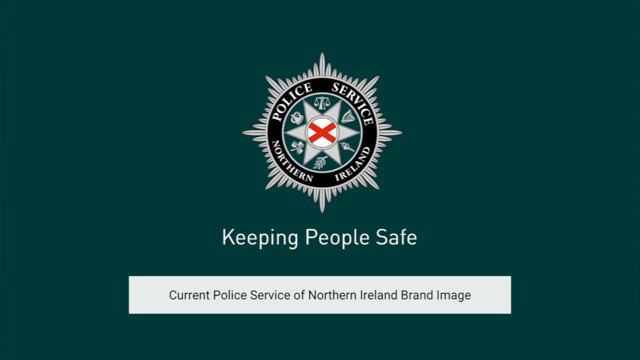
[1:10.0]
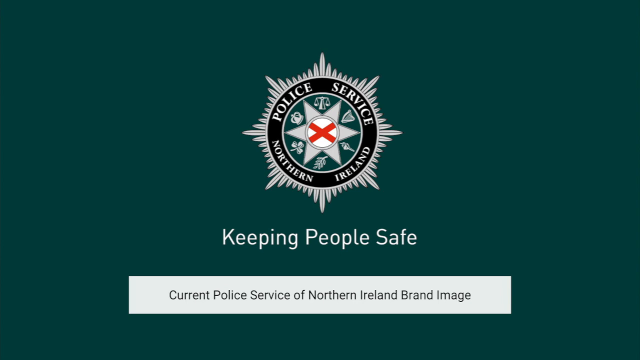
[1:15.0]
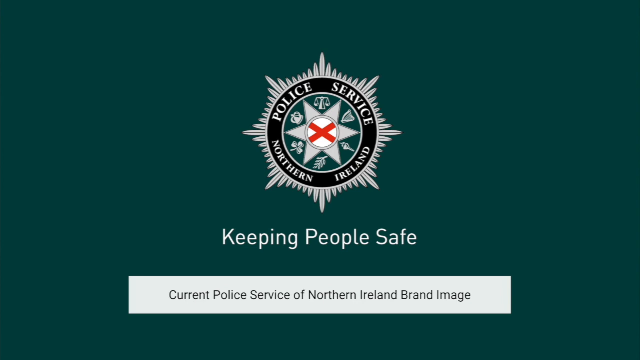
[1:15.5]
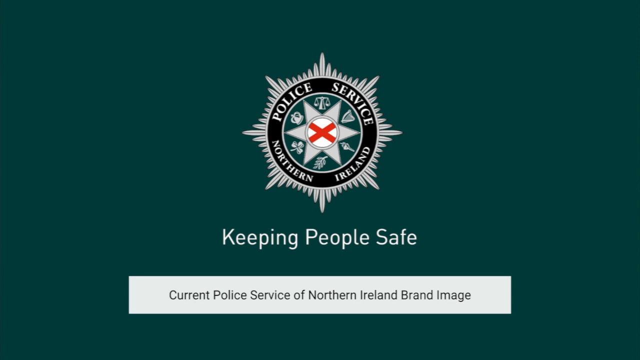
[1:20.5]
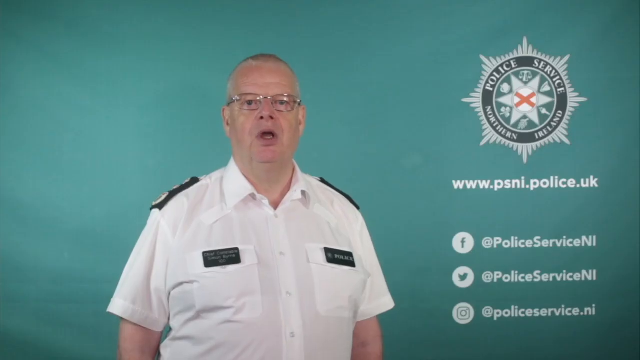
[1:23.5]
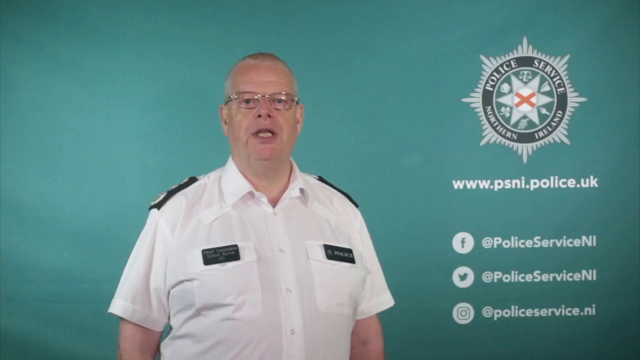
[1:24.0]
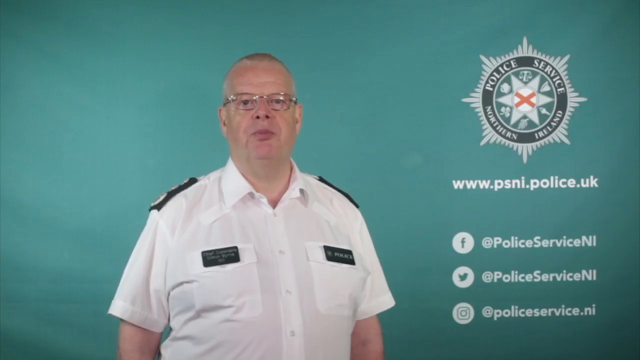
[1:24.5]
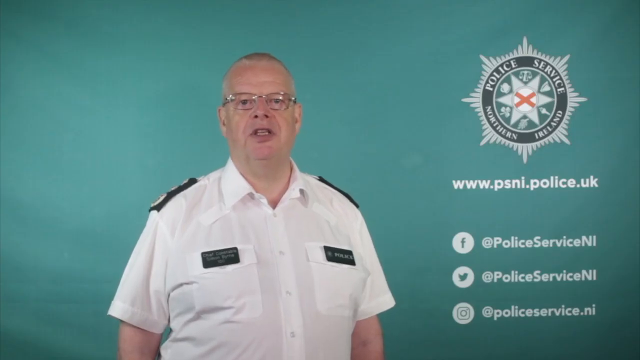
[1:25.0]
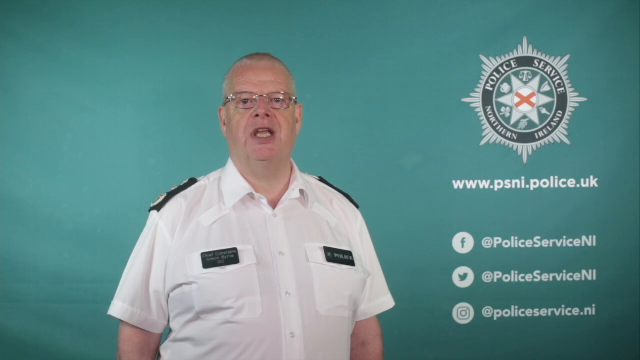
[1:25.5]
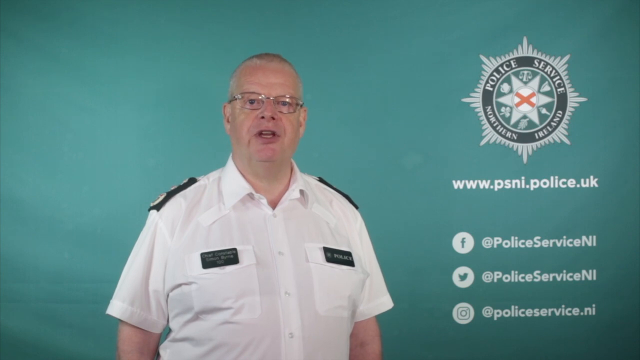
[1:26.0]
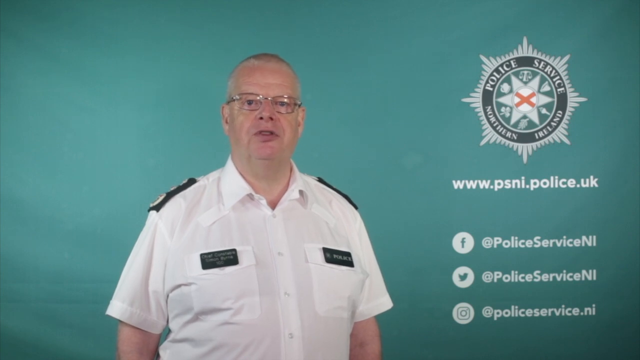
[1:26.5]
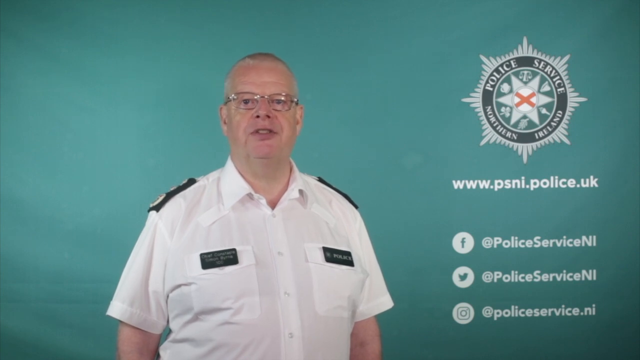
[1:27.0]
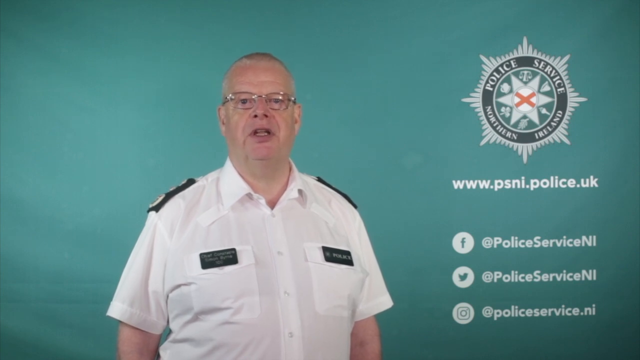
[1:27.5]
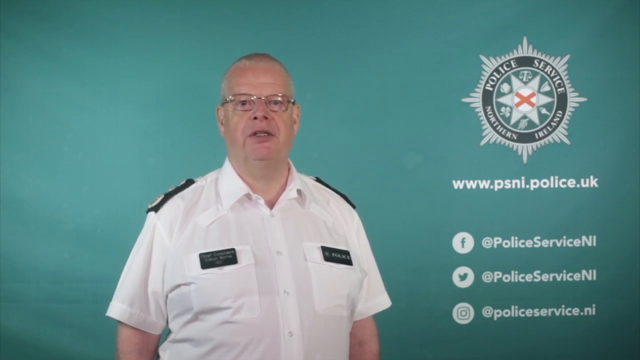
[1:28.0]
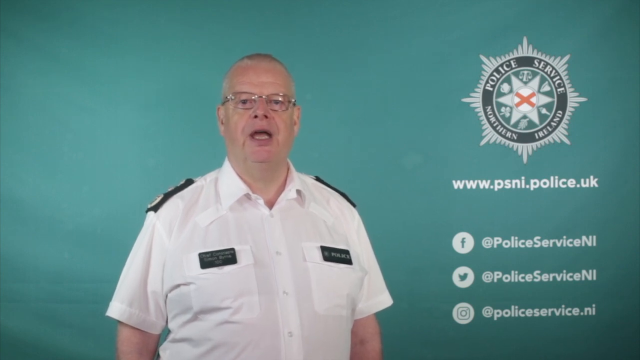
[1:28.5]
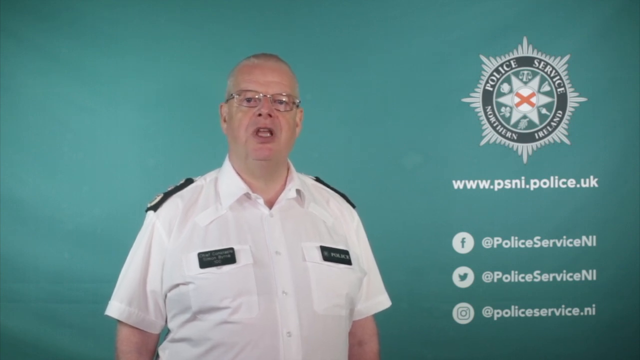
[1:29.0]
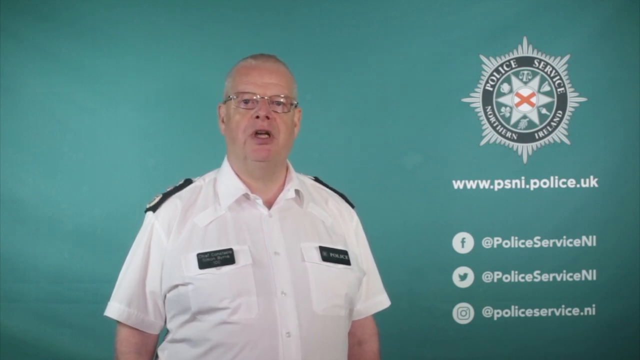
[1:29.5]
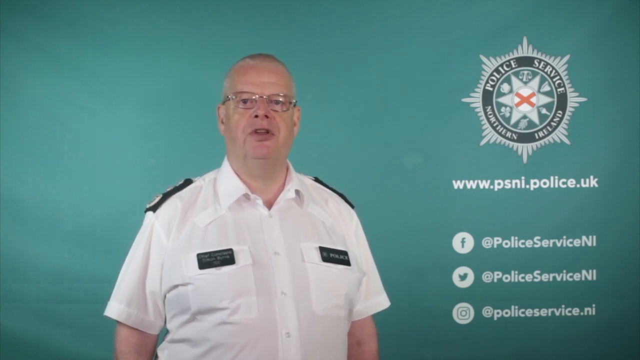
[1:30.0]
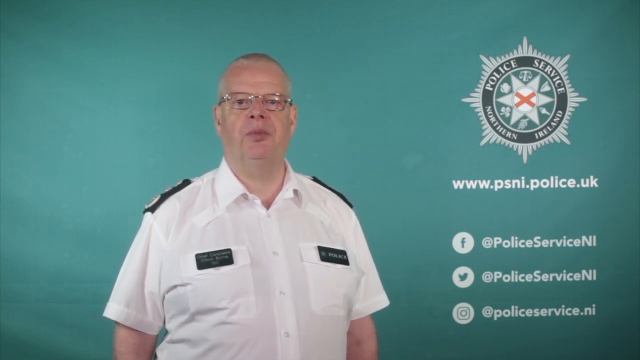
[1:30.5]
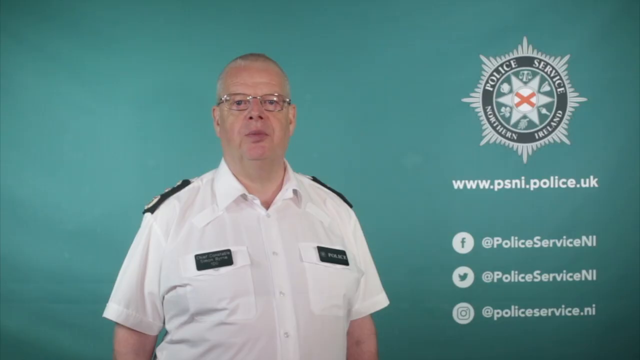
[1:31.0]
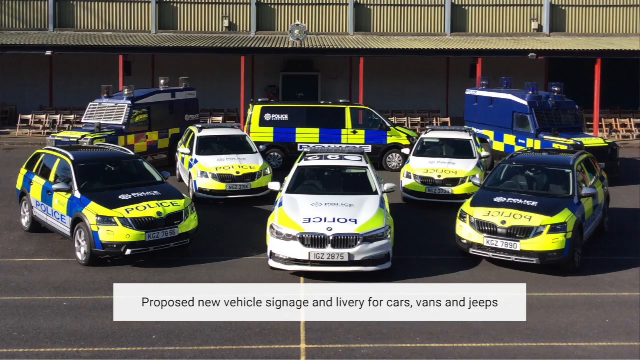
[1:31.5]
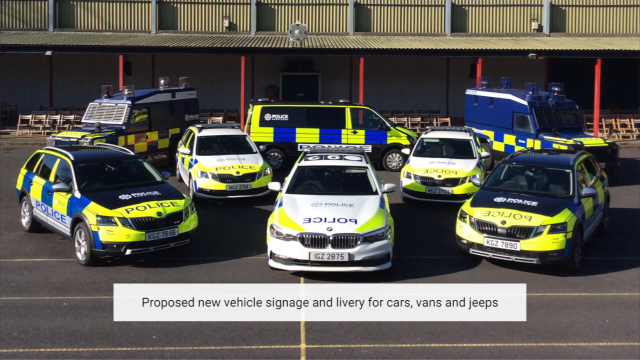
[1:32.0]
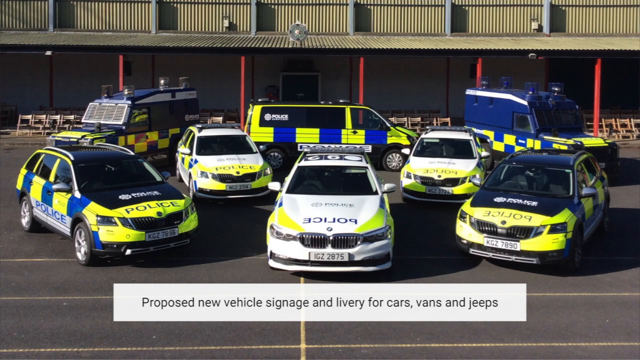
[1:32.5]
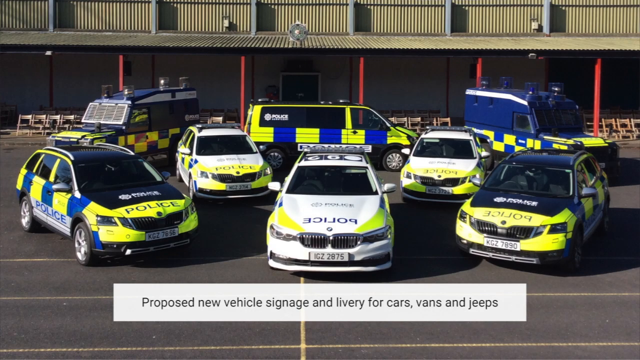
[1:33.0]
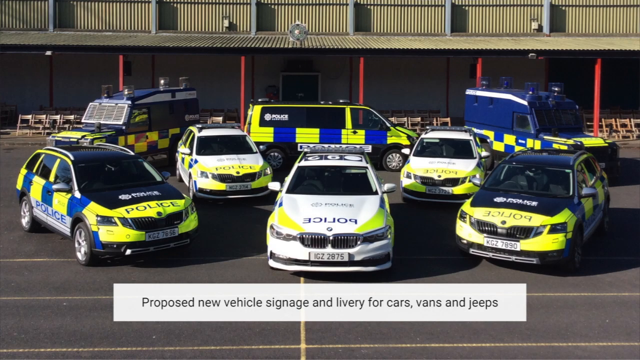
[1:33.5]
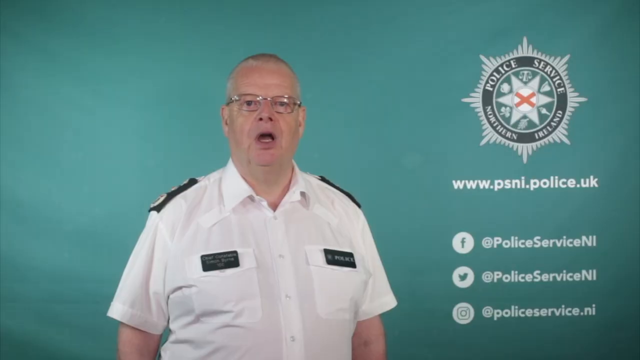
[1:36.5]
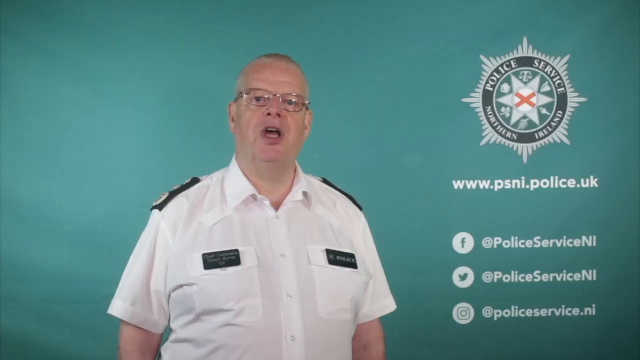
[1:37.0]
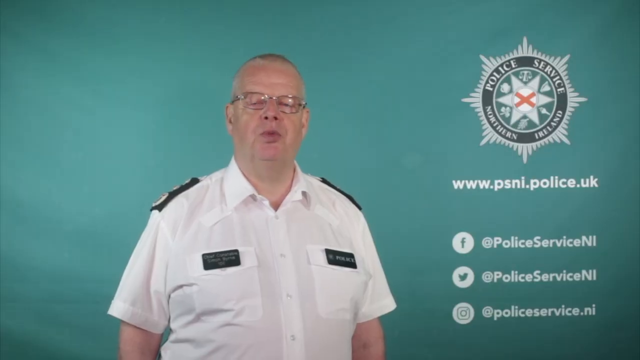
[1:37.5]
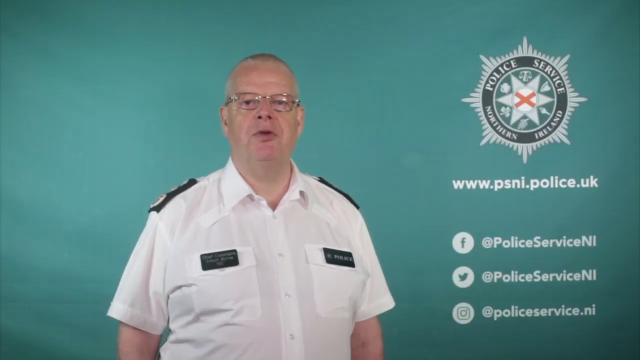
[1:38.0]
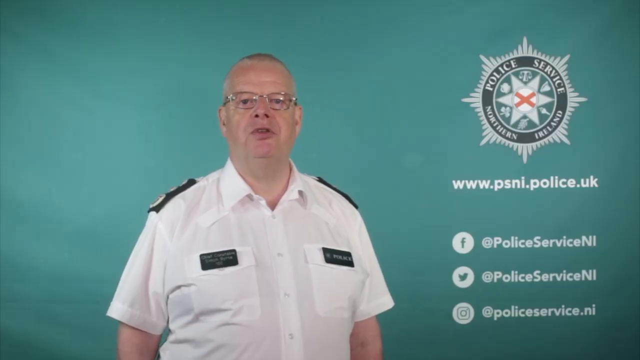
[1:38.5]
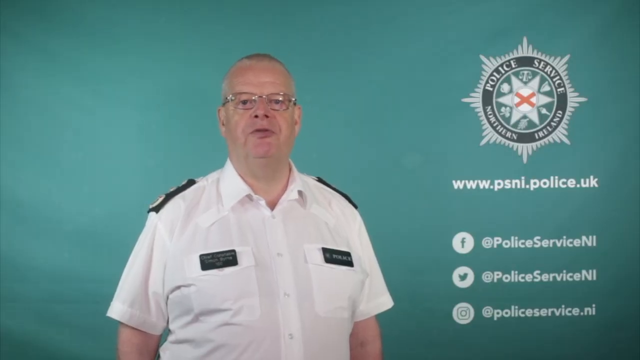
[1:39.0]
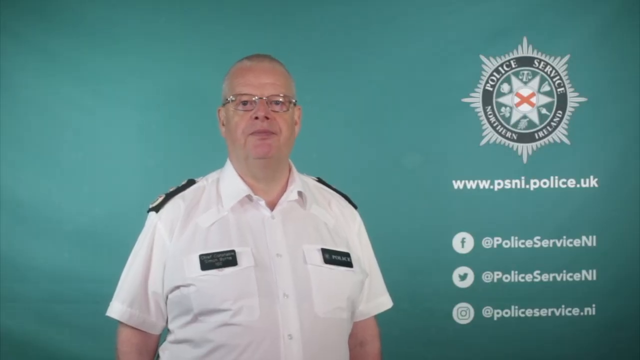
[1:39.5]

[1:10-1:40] The "Keeping people safe" message and the footer identifying the current Police Service of Northern Ireland brand image remain on the dark green background for a while. The Chief Constable then comes back on screen and talks again, with the insignia back in the top right-hand corner and the website link and social media handles in the bottom right-hand corner. After he talks, an image of proposed new vehicle designs for the police service appears, showing eight vehicles: cars in the front, a van in the back, and what appear to be two jeeps on either side of the back. Some cars are white, yellow and blue, while two other cars are mostly yellow and blue. The van is yellow and blue, and the jeeps are predominantly blue with some yellow.